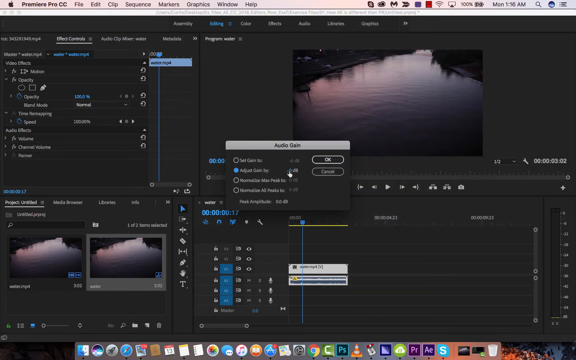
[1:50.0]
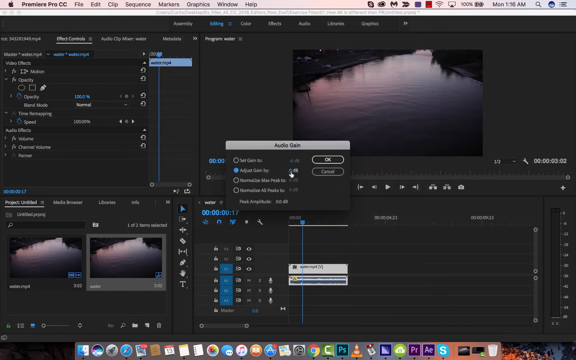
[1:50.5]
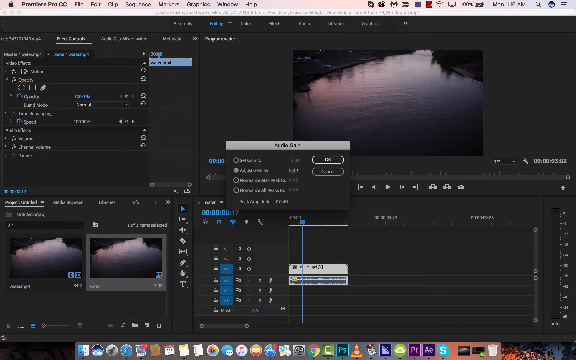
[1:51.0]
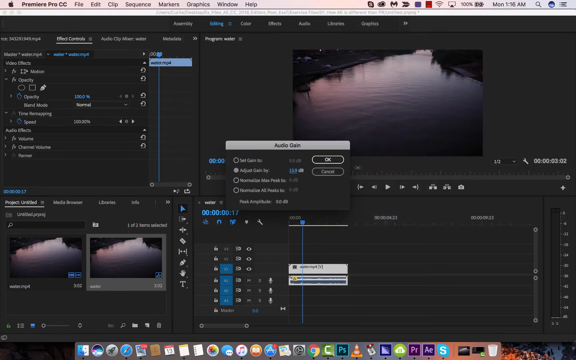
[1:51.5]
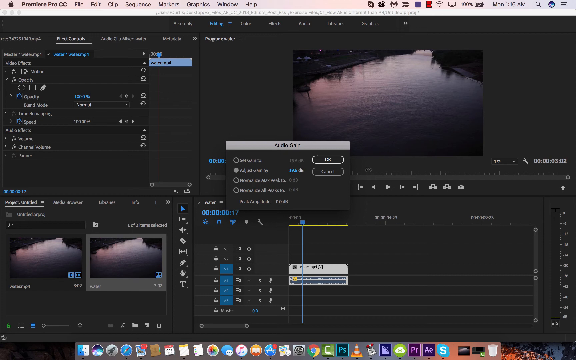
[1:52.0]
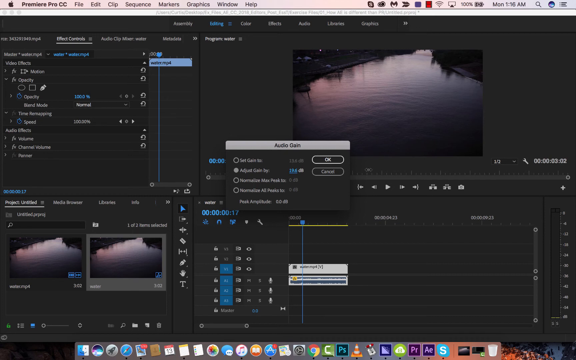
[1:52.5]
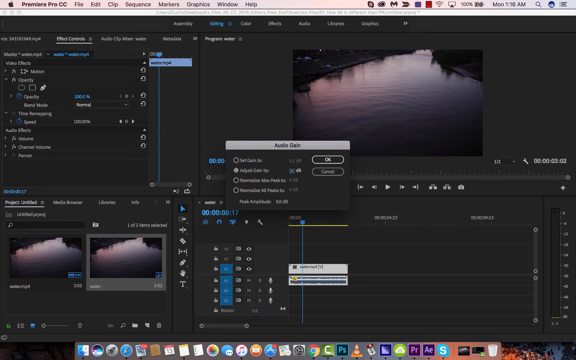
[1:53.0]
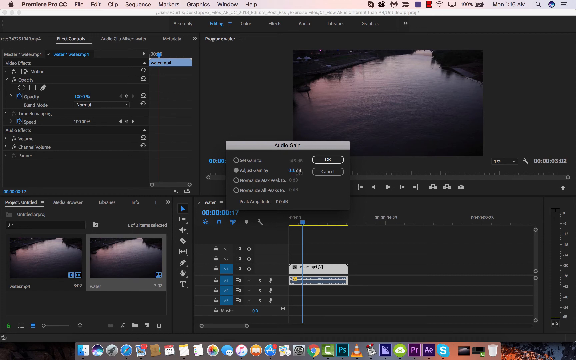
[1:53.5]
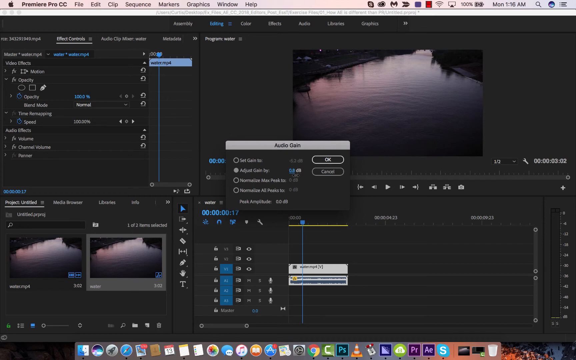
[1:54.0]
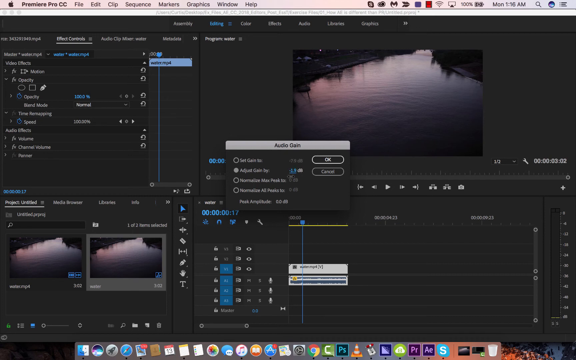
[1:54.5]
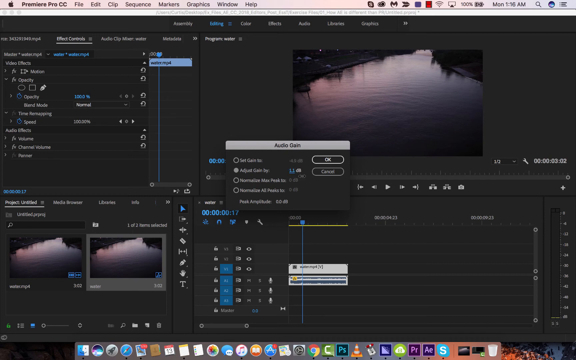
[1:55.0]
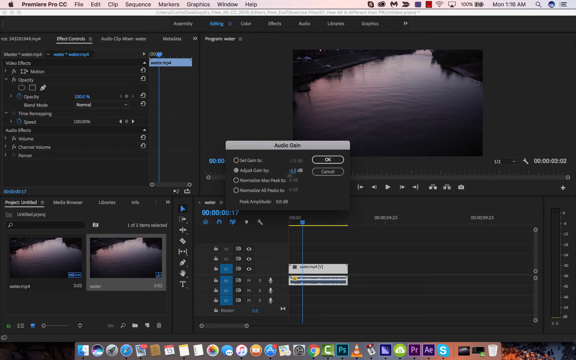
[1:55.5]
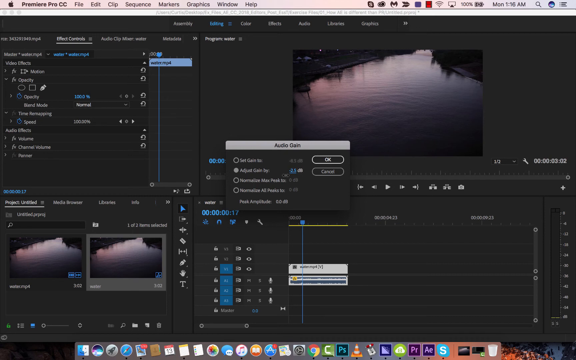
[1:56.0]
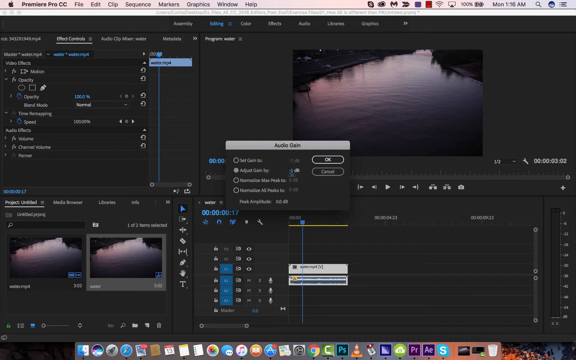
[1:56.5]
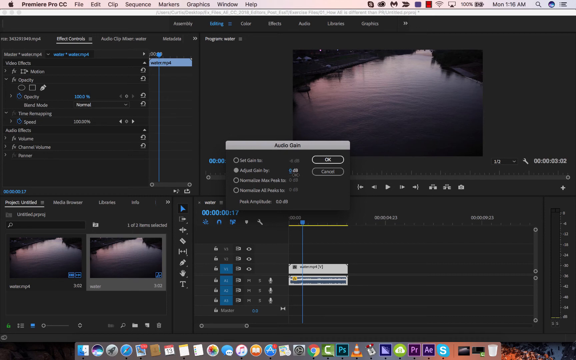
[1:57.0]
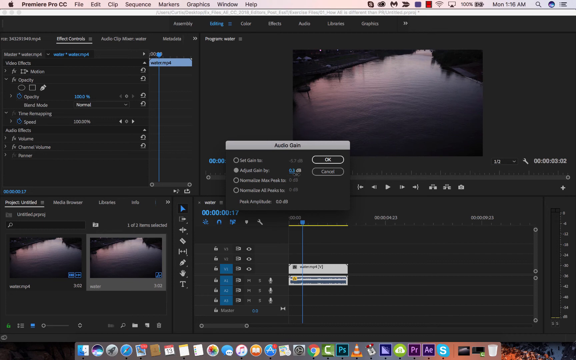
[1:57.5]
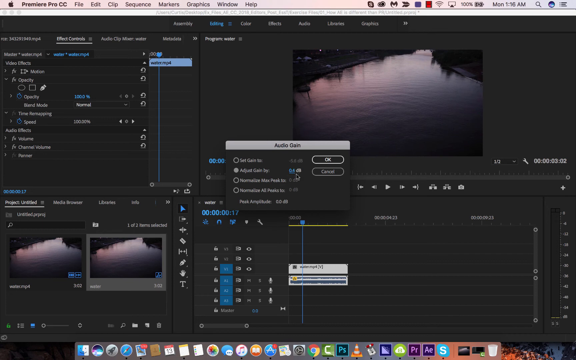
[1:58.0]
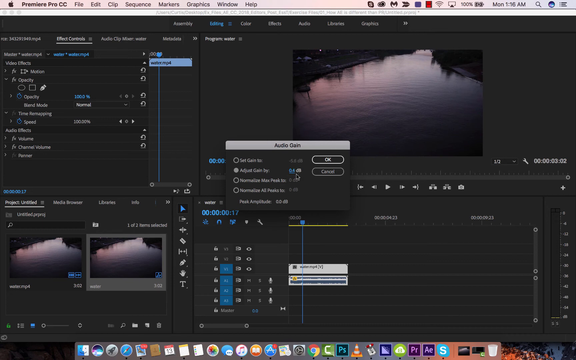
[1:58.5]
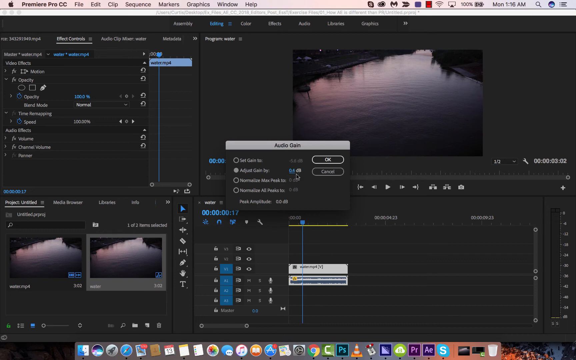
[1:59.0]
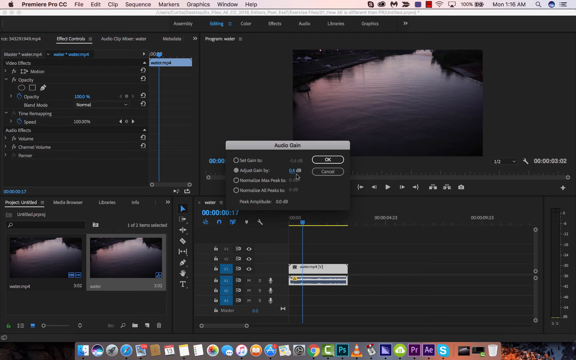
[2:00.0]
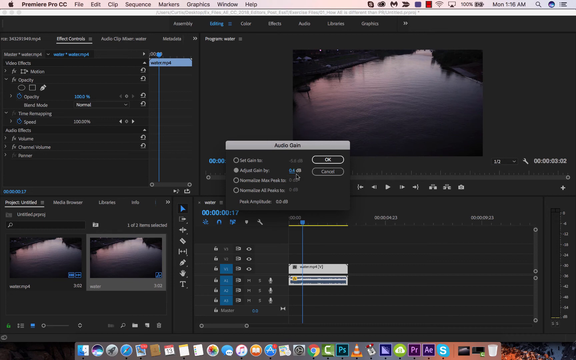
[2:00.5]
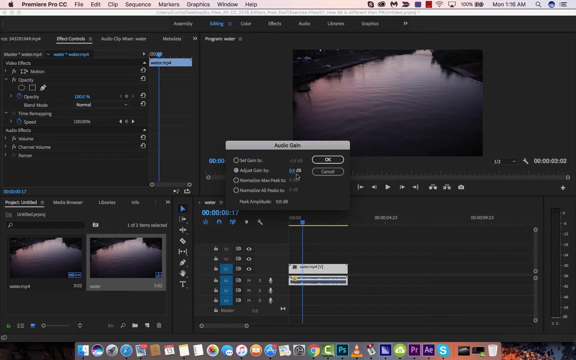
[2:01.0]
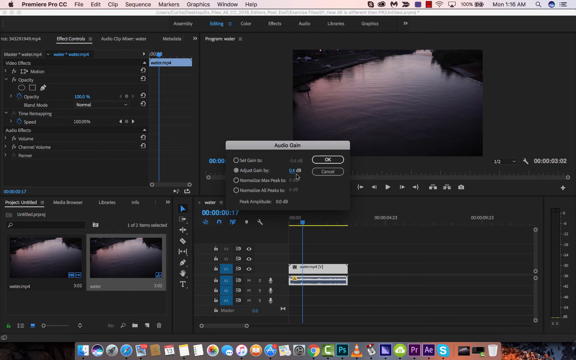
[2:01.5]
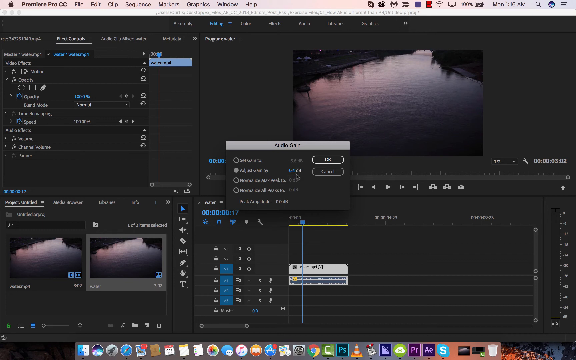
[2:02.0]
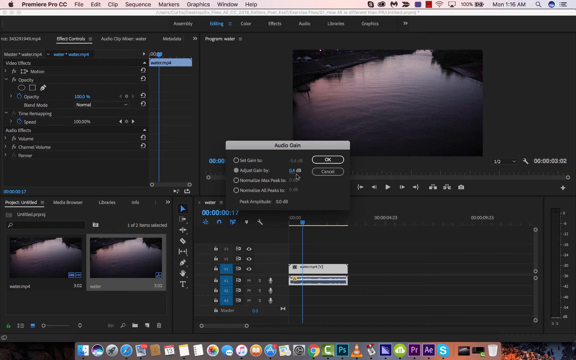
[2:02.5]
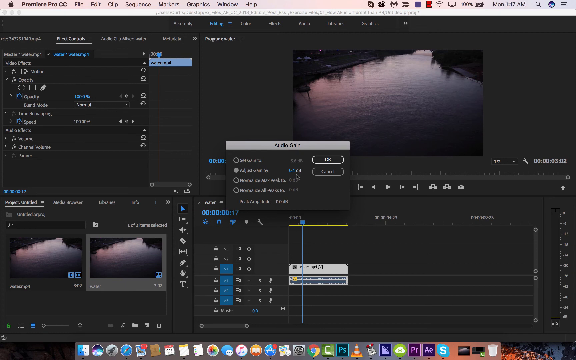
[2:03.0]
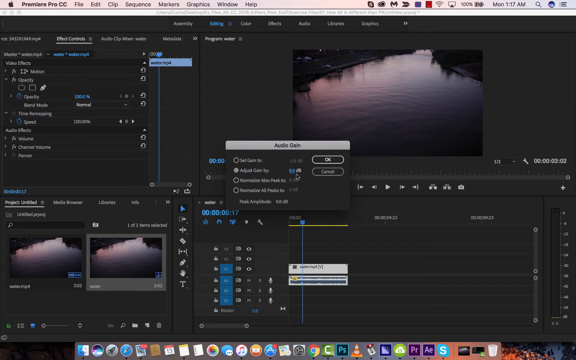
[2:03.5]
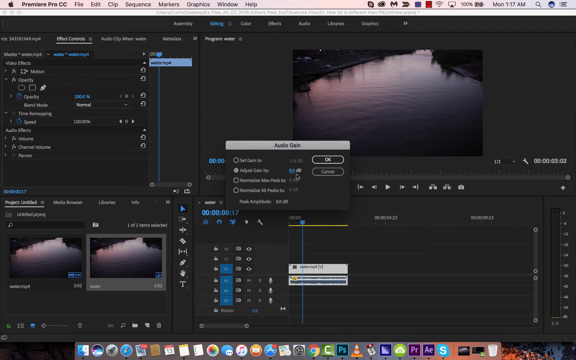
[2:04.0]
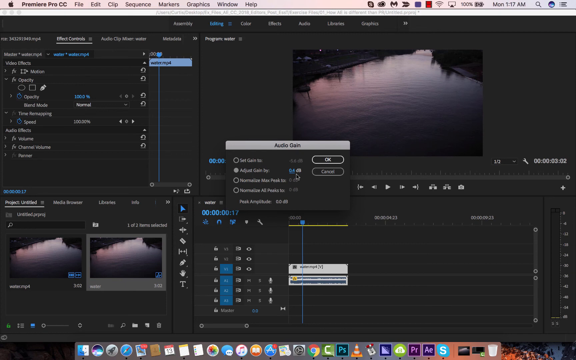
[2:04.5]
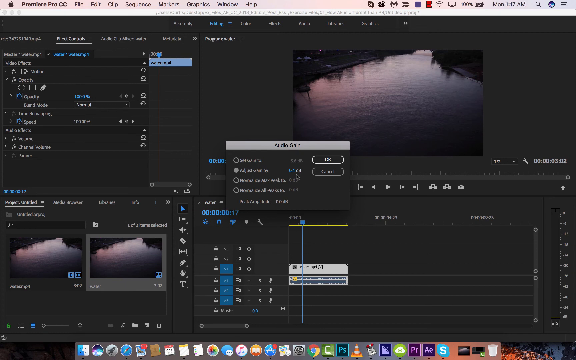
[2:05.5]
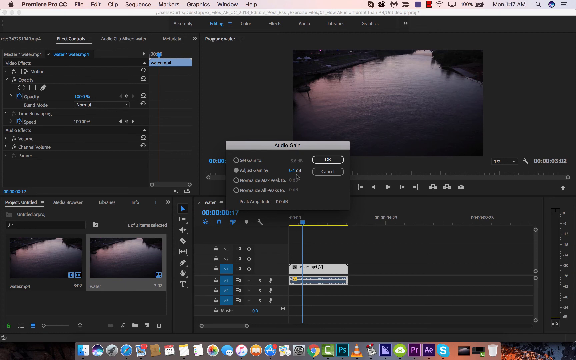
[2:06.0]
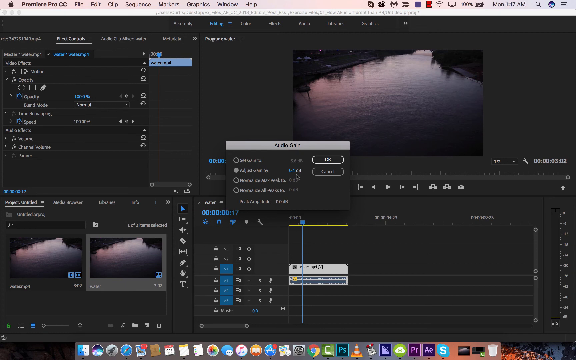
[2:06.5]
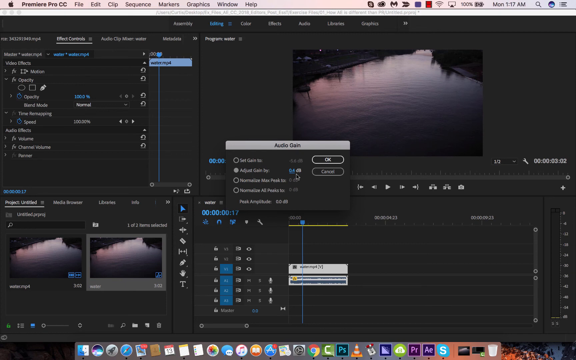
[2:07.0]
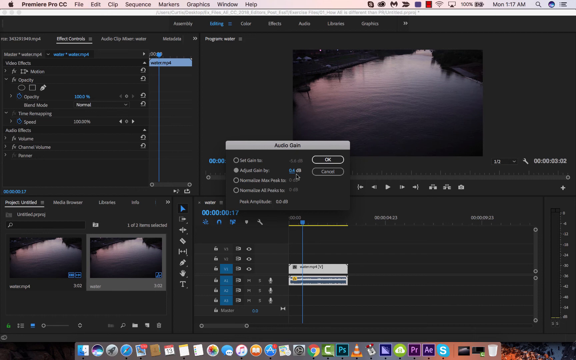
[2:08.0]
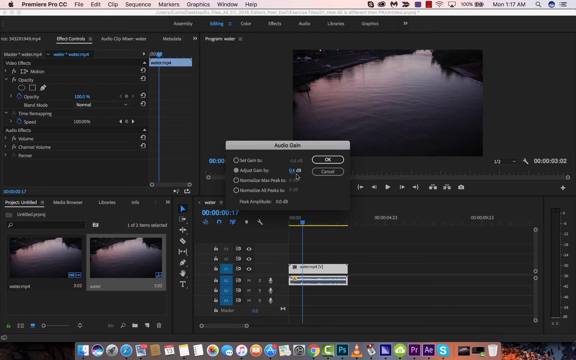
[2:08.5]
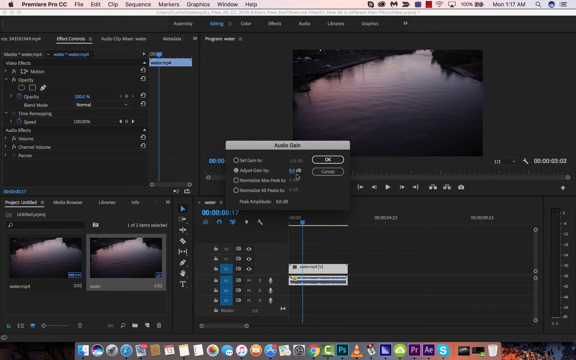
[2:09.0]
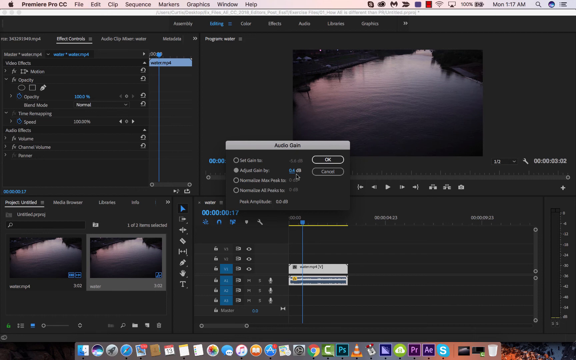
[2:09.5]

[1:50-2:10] The frame is a little wider than it is tall. The Apple icon in the upper left indicates a macOS desktop, and to its right it says "Premiere Pro CC", followed by the menus File, Edit, Clip, Sequence, Markers, Graphics, Window and Help. The upper right has icons for other applications along with the day and time. Just below, in the upper left, are options for navigating the program, and to the right is a picture of a lake, though it might be a different body of water. It goes from pink in the upper left to gray in the lower right, and the upper-left and upper-right corners of the water are very dark; the whole picture is very dim. The lower left holds two copies of the image for editing purposes. In the very center is an overlaid window labelled "Audio Gain" in a gray bar at its top, with four options; the second one is selected, and the user appears to be adjusting the sub-options within it.